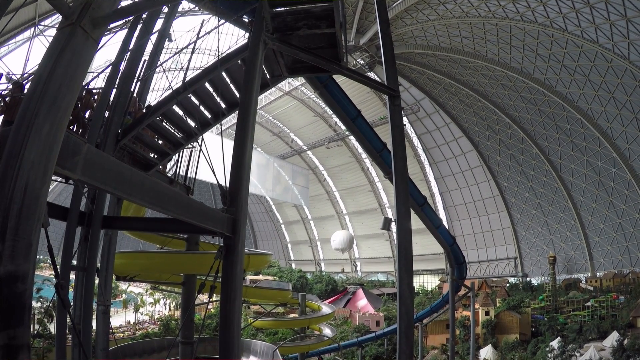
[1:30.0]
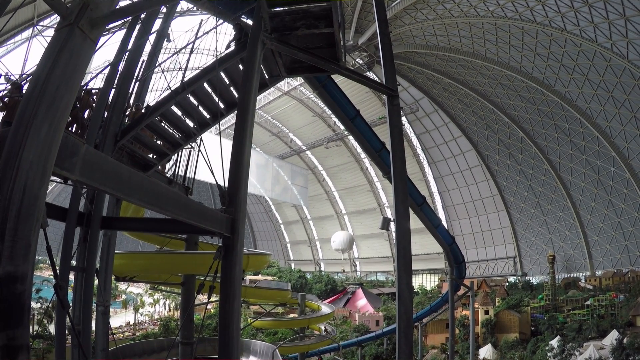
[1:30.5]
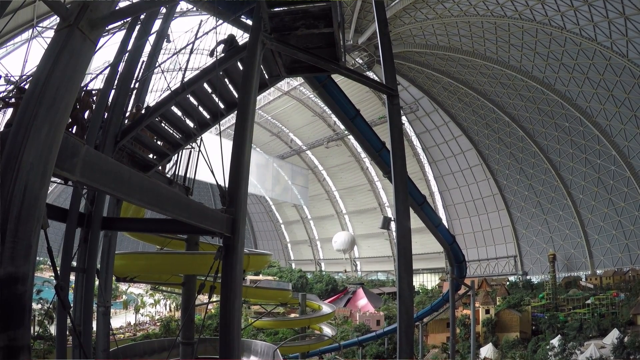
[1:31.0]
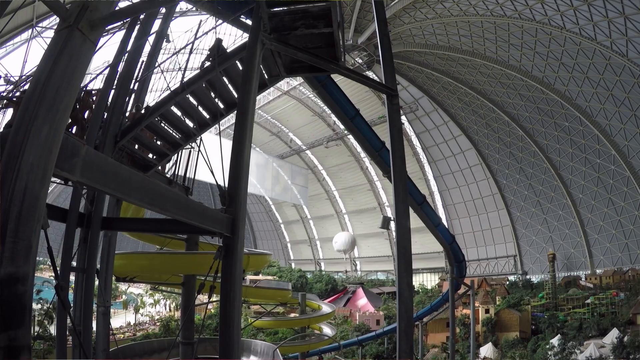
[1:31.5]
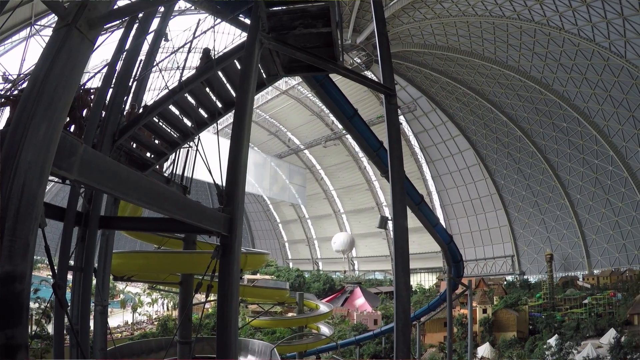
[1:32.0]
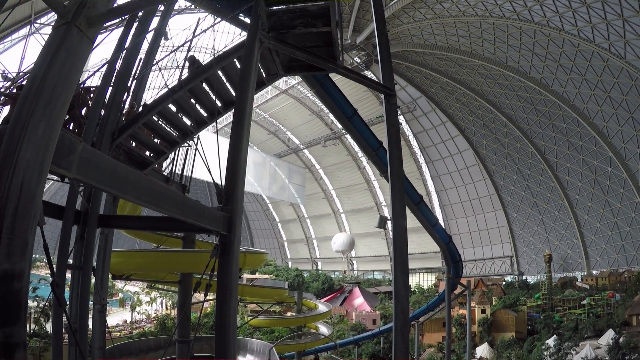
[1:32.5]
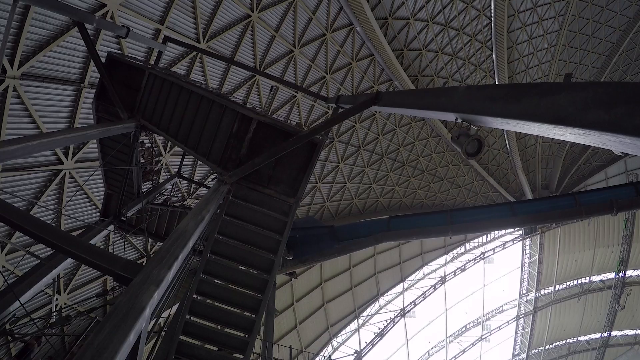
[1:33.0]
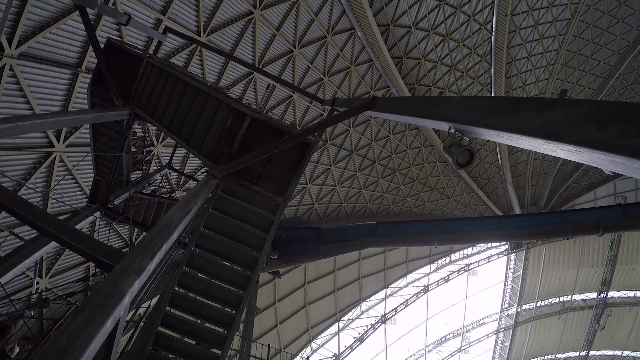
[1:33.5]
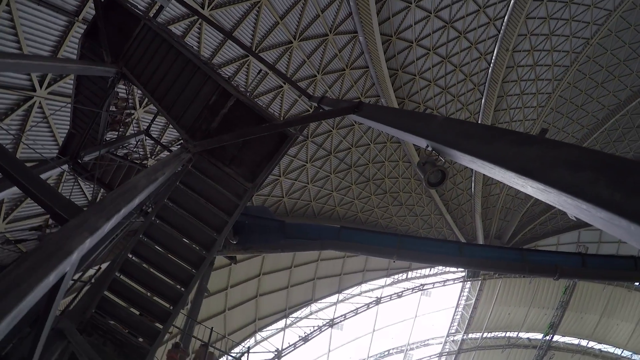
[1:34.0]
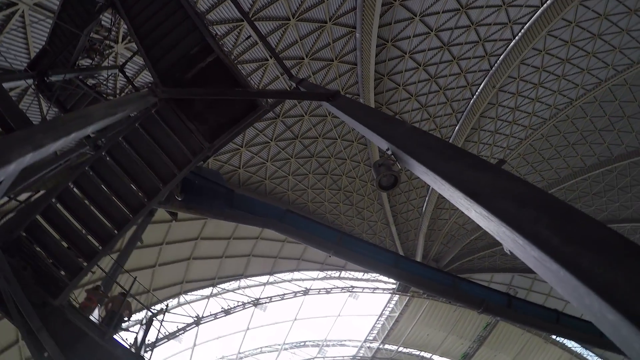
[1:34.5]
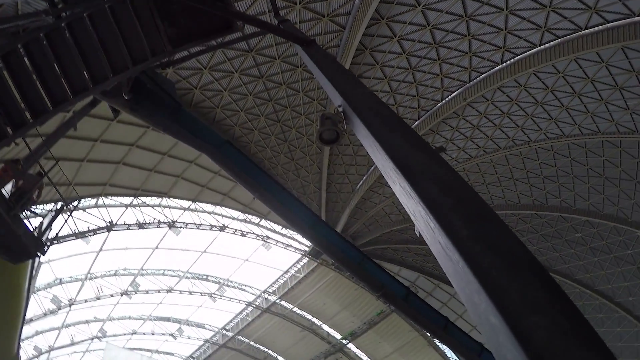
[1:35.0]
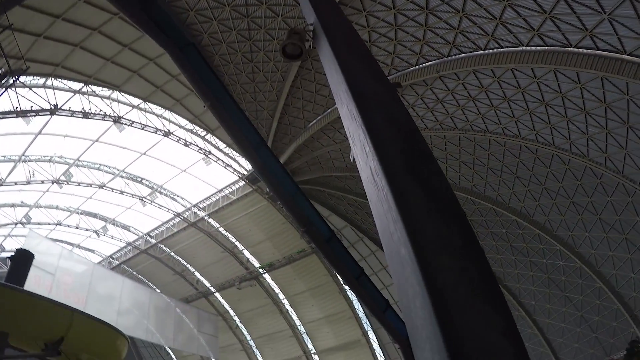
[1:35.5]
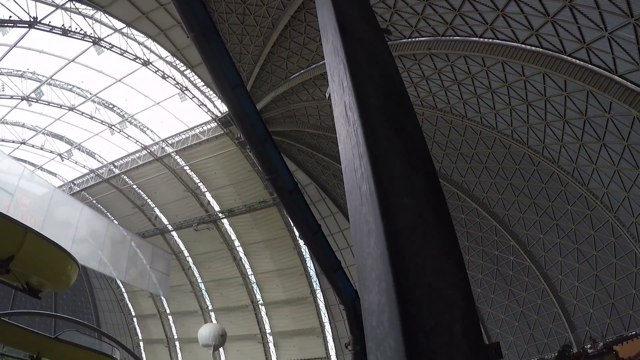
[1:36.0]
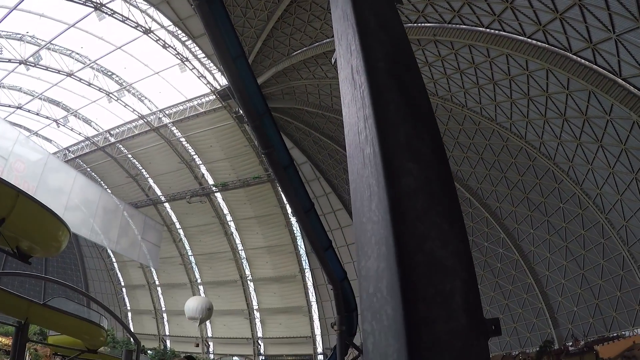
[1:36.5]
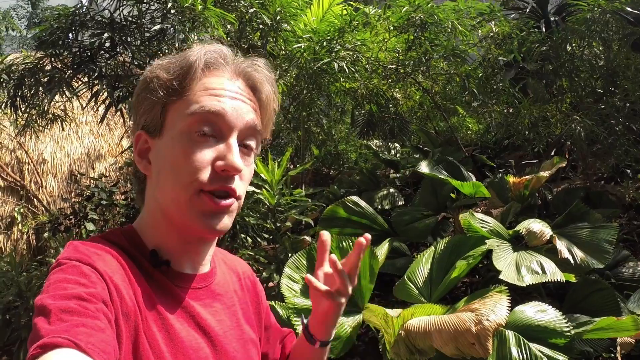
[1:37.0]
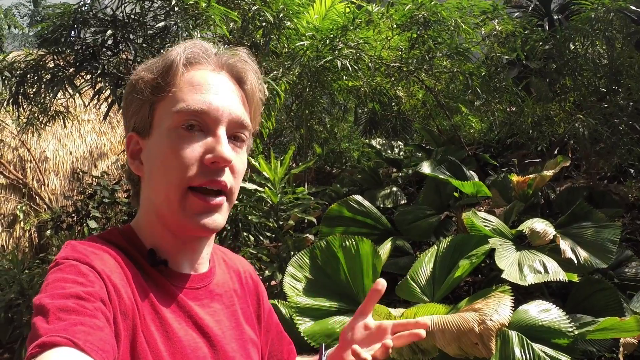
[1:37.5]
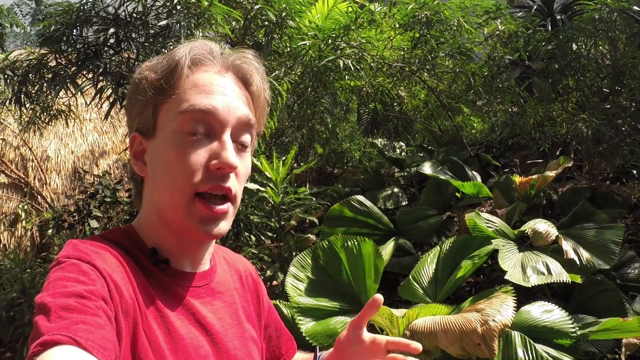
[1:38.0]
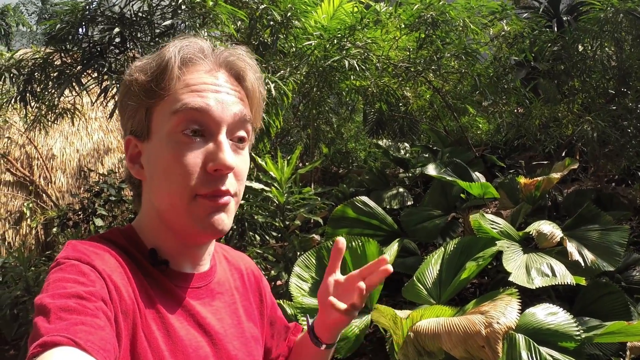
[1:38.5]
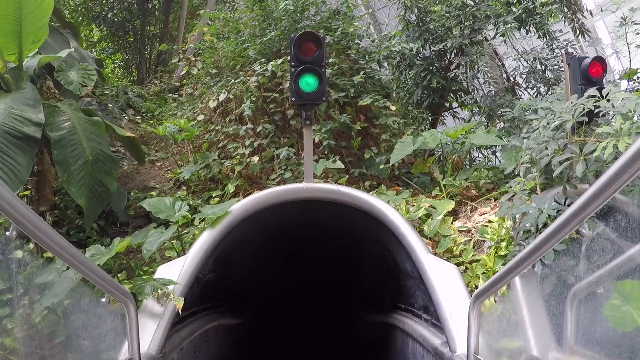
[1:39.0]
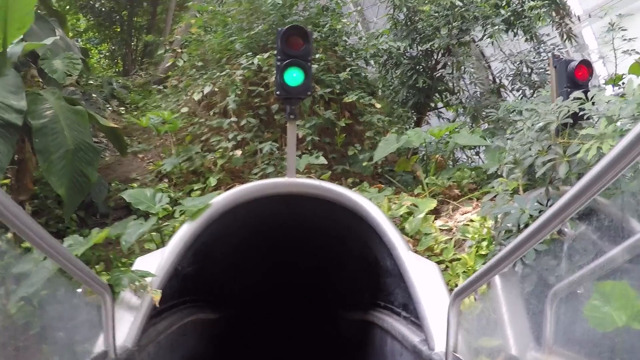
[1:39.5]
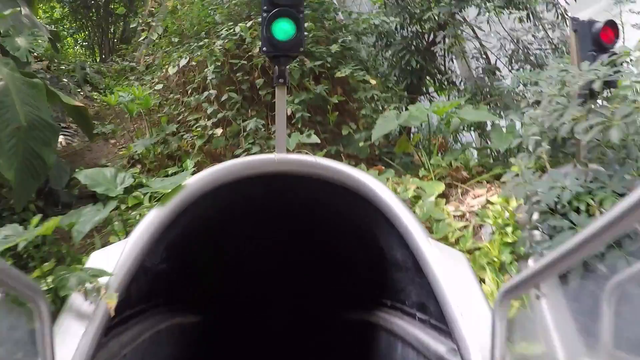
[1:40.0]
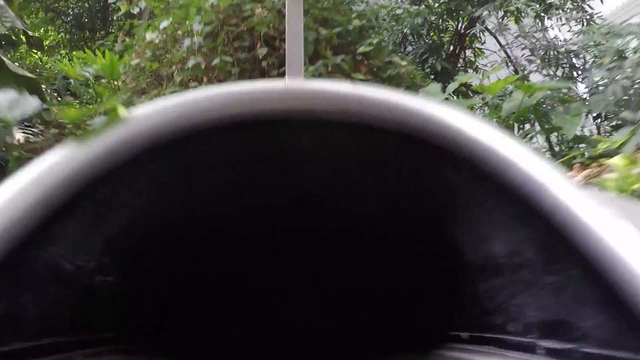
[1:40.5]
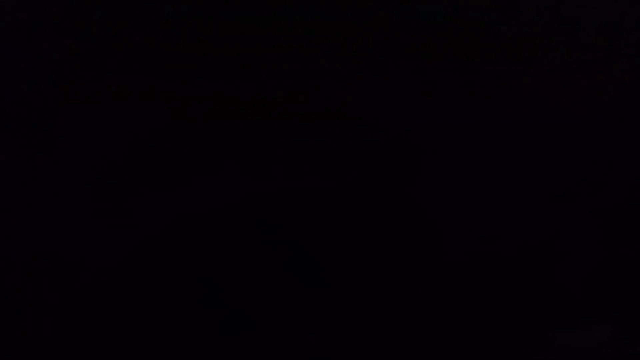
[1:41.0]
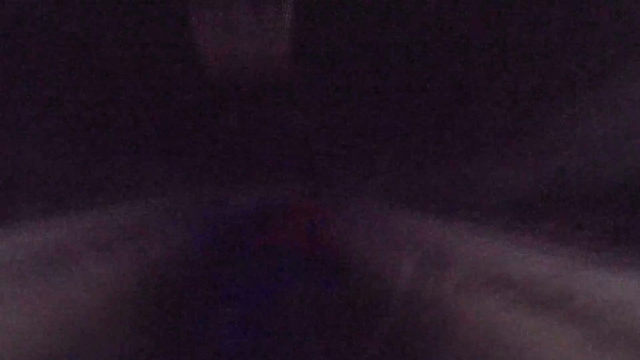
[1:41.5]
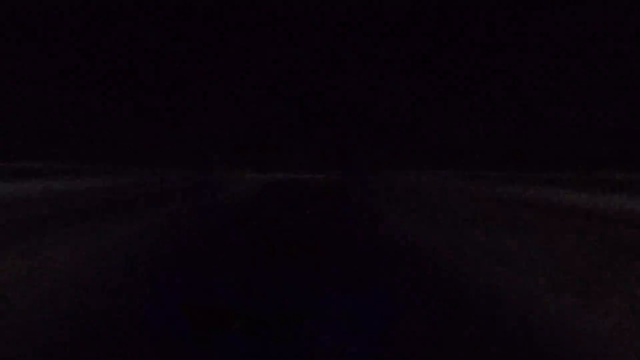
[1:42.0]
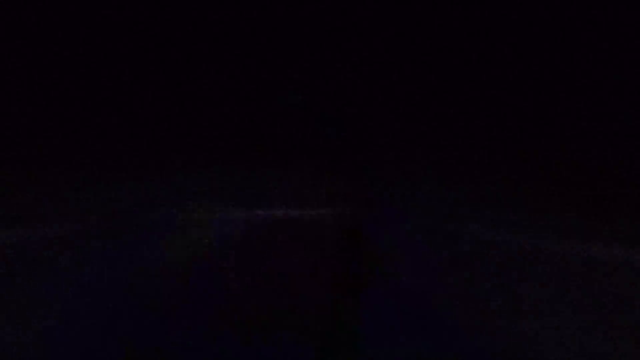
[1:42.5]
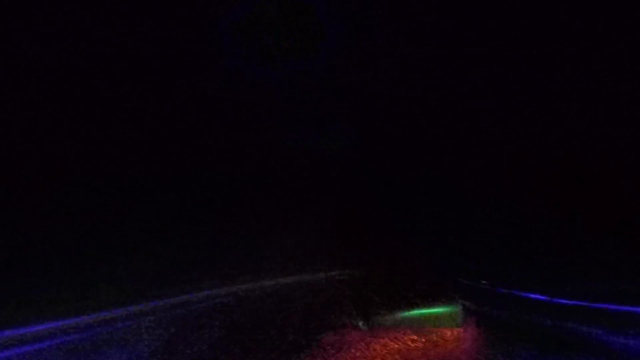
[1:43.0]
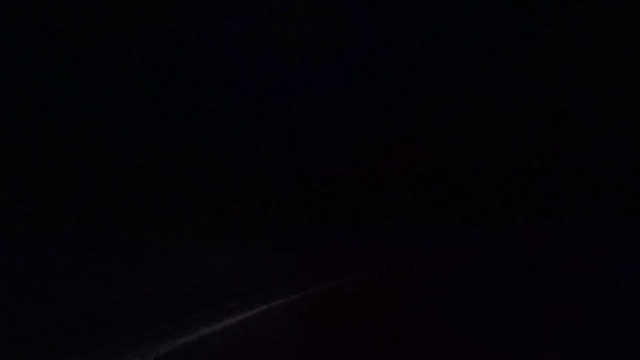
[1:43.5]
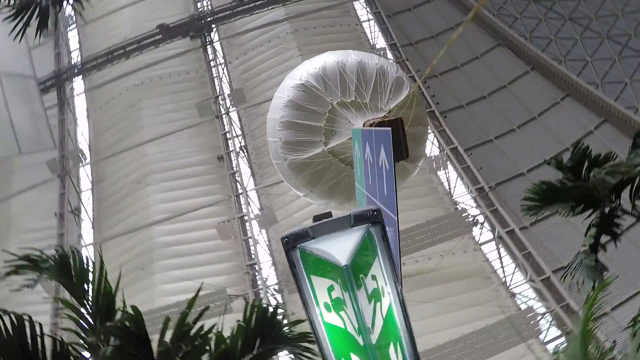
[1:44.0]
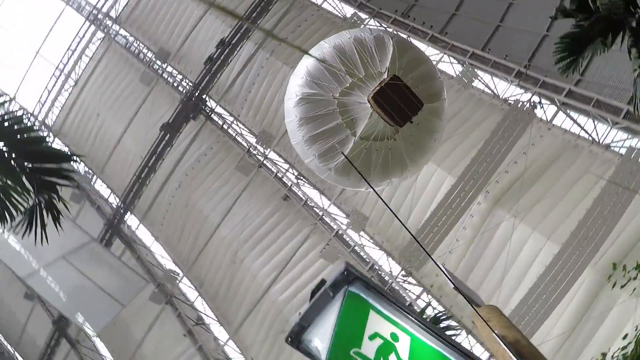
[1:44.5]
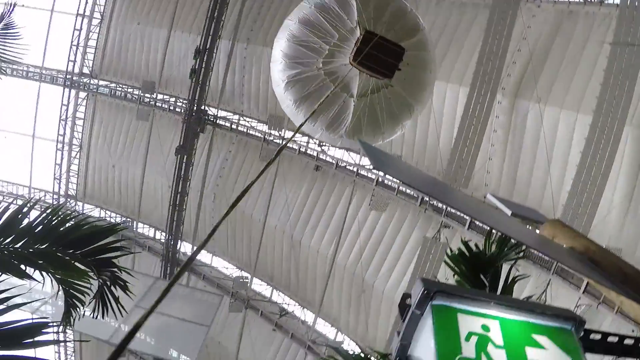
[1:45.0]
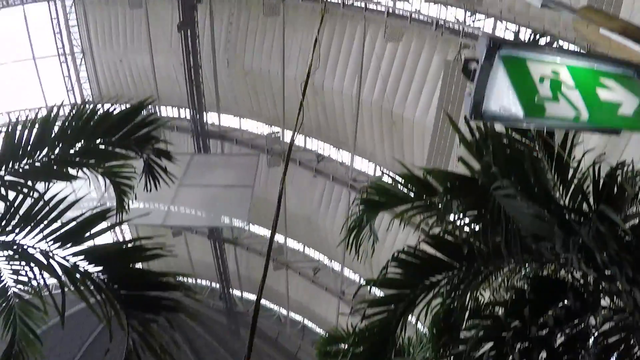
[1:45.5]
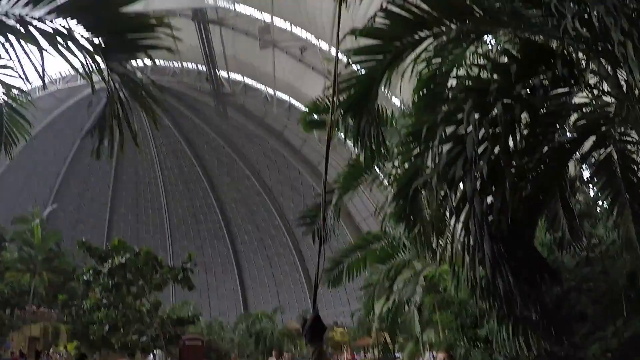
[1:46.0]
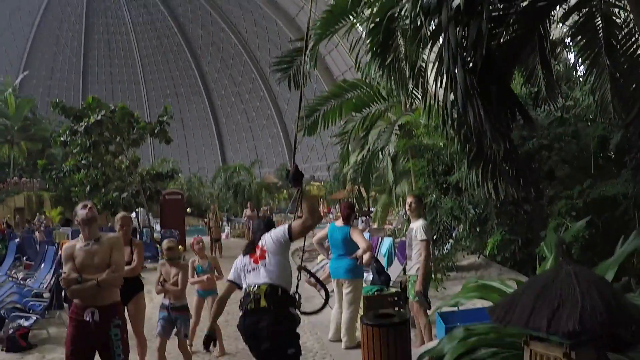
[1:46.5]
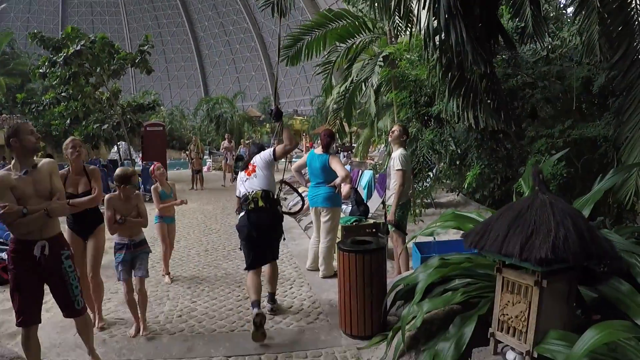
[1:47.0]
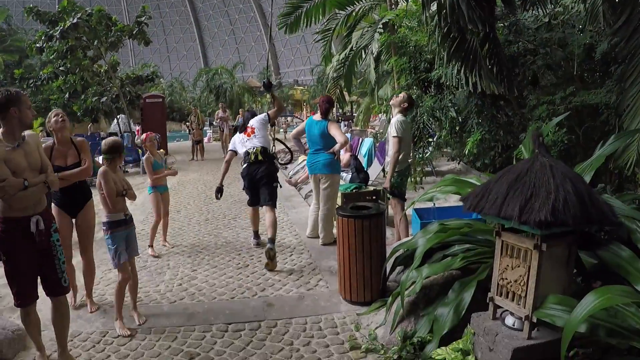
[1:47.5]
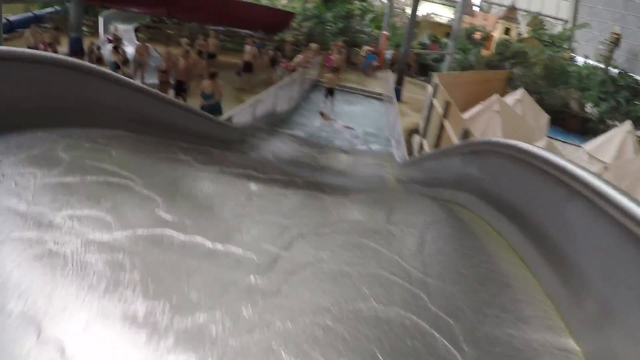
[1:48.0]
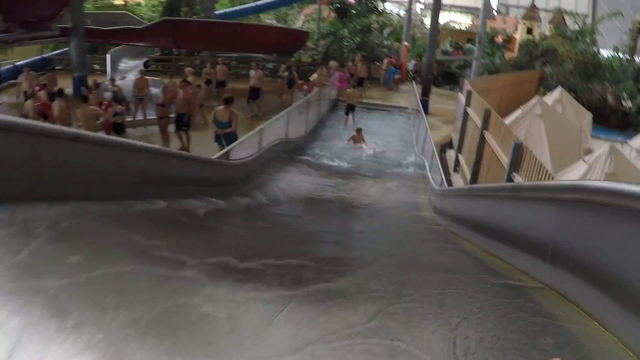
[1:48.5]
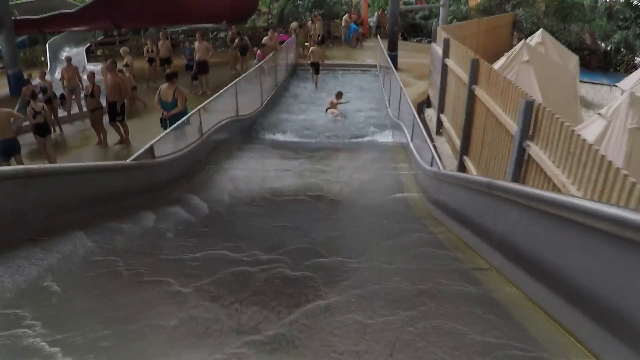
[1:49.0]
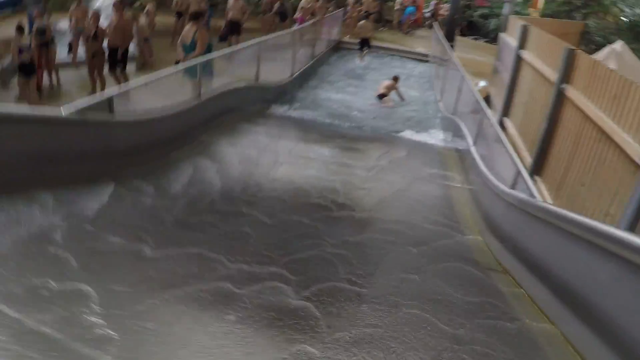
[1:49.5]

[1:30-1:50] Inside the dome, a person walks on a gray walkway at the top, with some of the dome's wall in the background and portions of the inside roof visible. Outside, a man with short brown hair in a red t-shirt faces a camera and talks, with lush greenery and the sun shining down behind him. Next is what looks like a metal tunnel going into a hillside, with greenery above it, a green light on a pole above the tunnel that is on, and a red light that is on at the left side of the tunnel, with greenery in the background. The view goes into the dark tunnel, where bright lights flash around. Outside again, looking up, the bottom of a white hot air balloon and the bottom of its basket are visible, along with part of the inside ceiling of the dome and a green palm tree on the left-hand side.